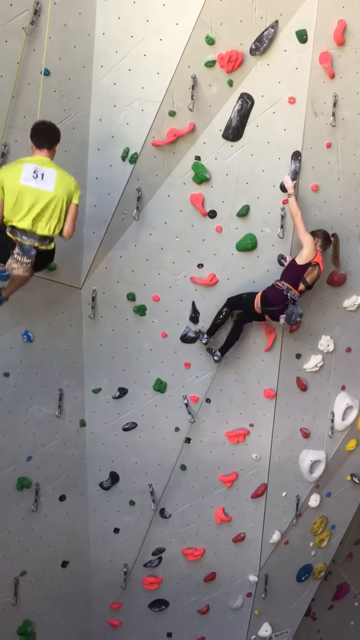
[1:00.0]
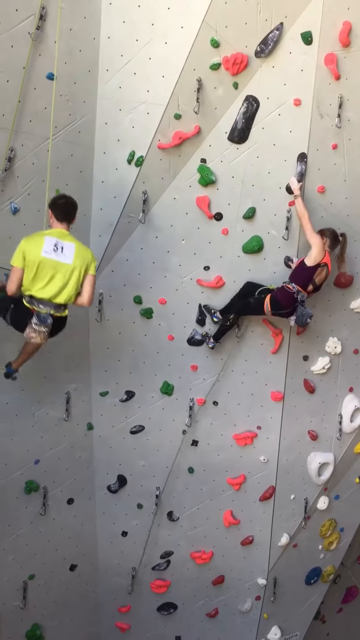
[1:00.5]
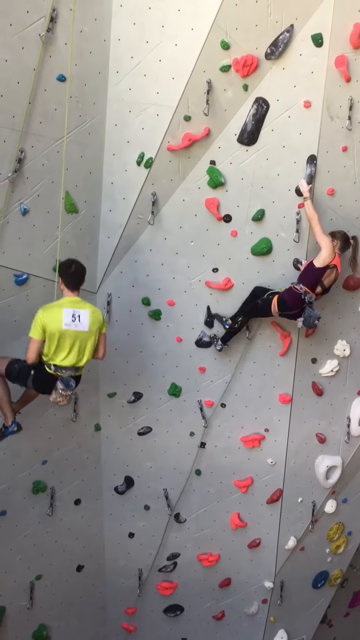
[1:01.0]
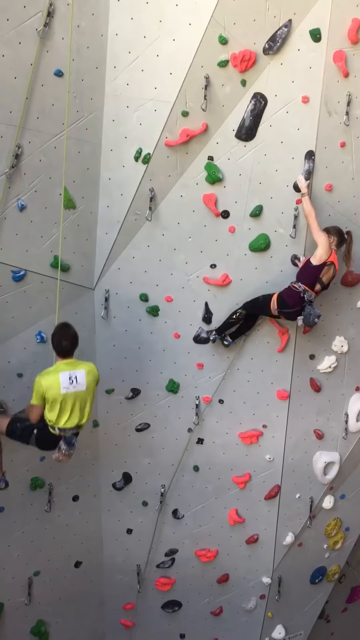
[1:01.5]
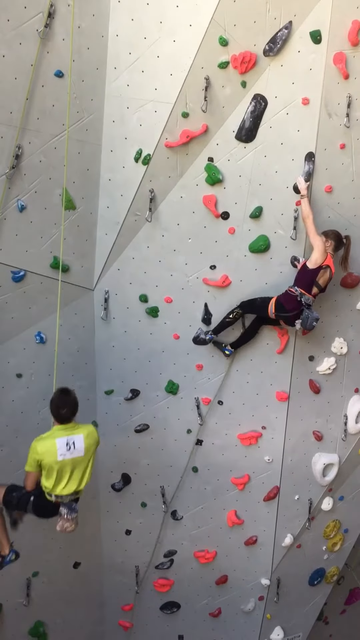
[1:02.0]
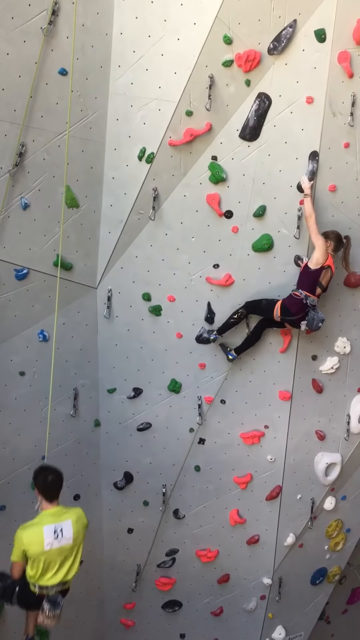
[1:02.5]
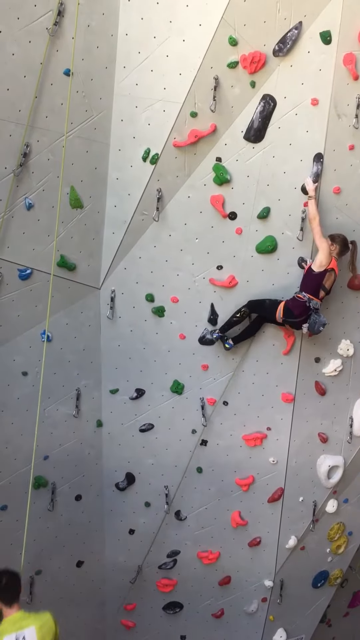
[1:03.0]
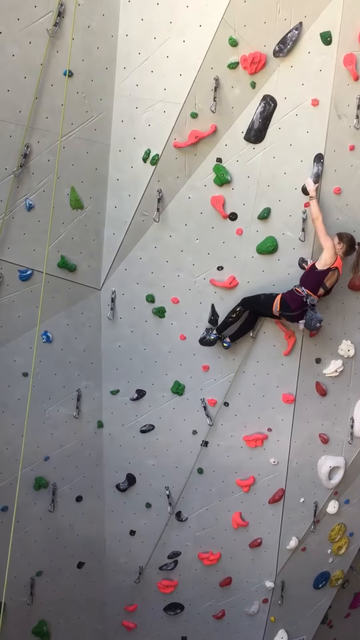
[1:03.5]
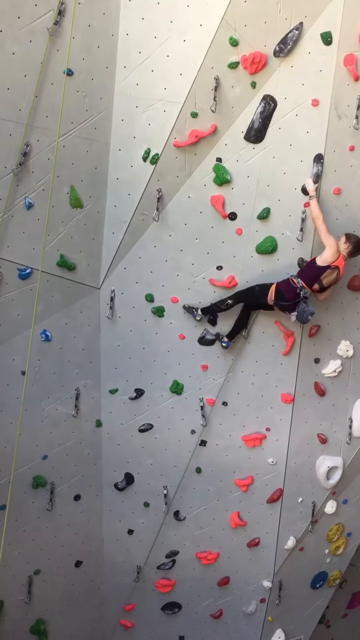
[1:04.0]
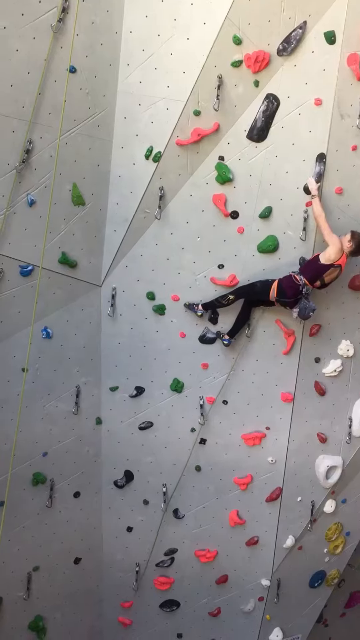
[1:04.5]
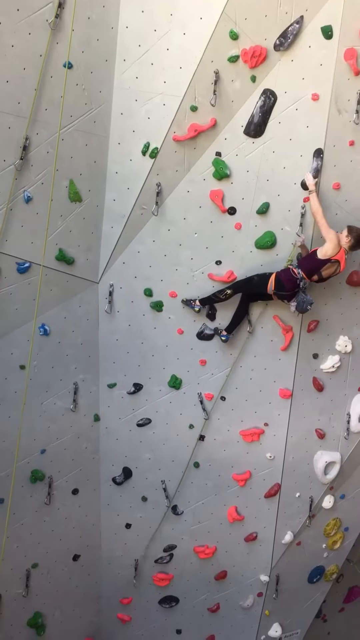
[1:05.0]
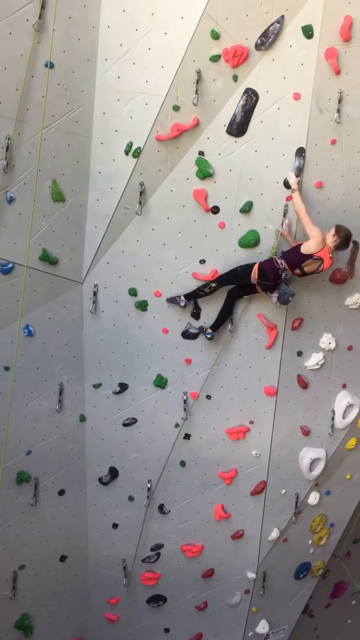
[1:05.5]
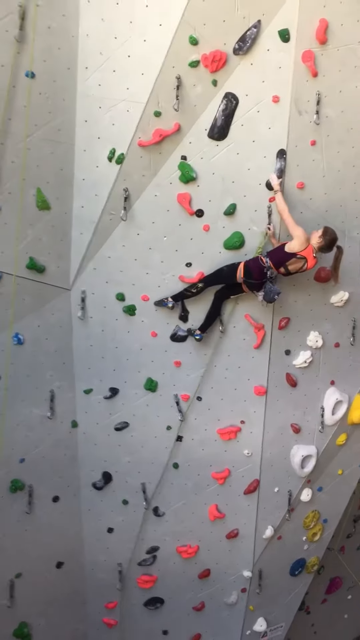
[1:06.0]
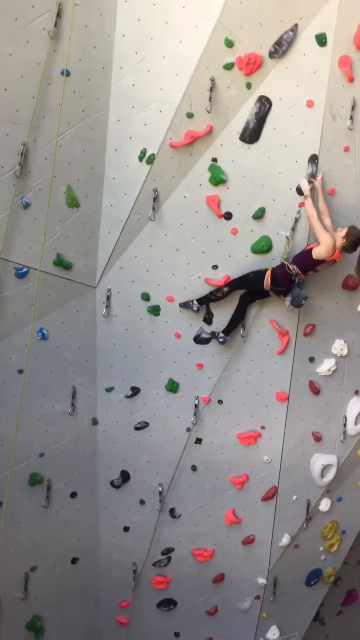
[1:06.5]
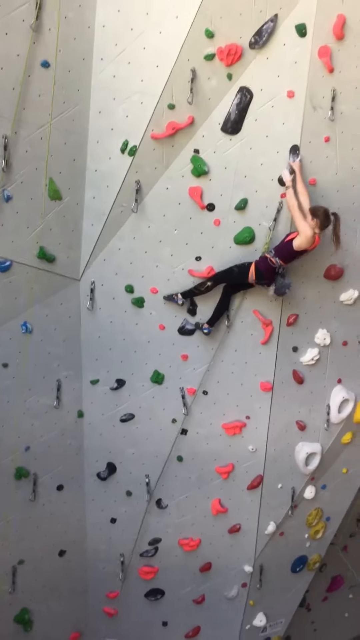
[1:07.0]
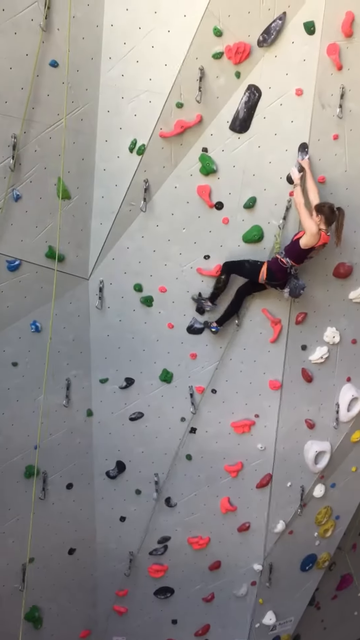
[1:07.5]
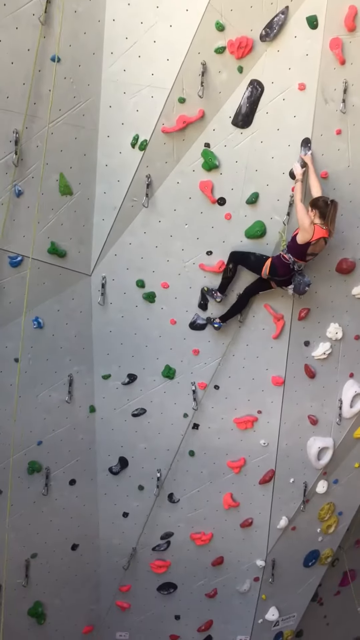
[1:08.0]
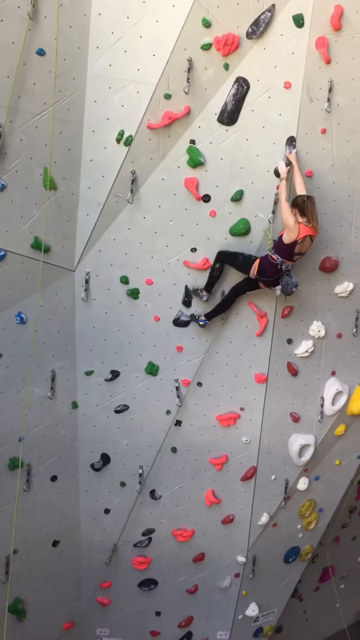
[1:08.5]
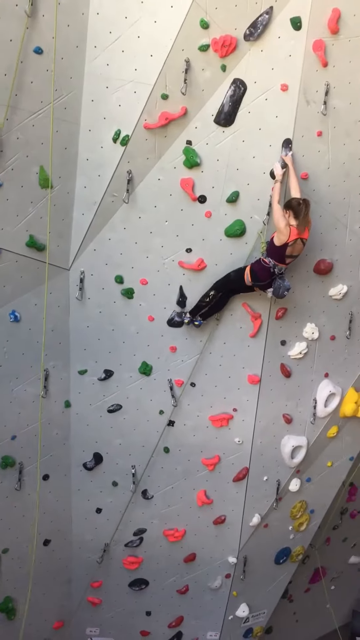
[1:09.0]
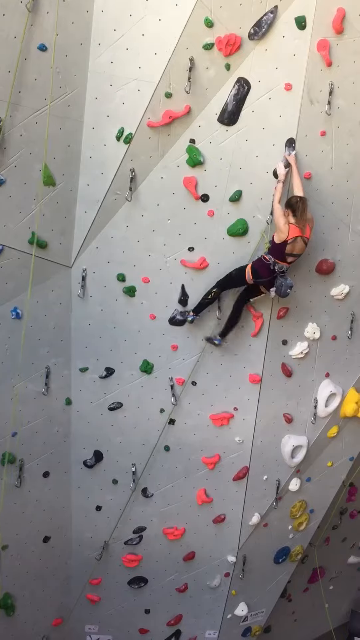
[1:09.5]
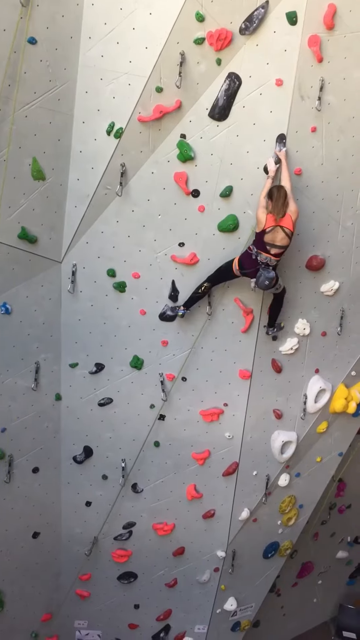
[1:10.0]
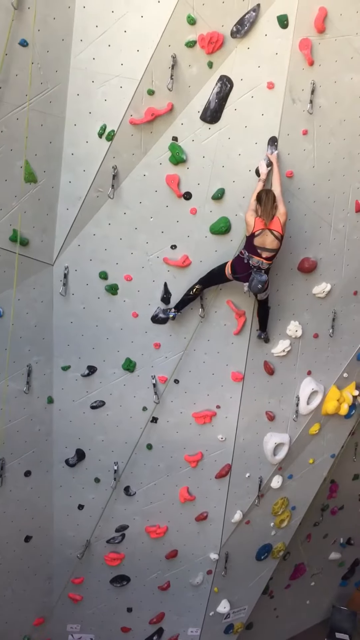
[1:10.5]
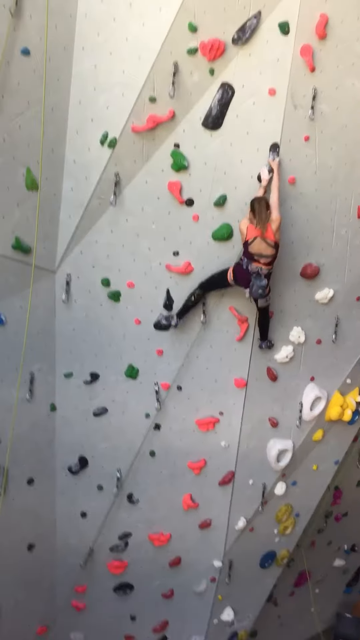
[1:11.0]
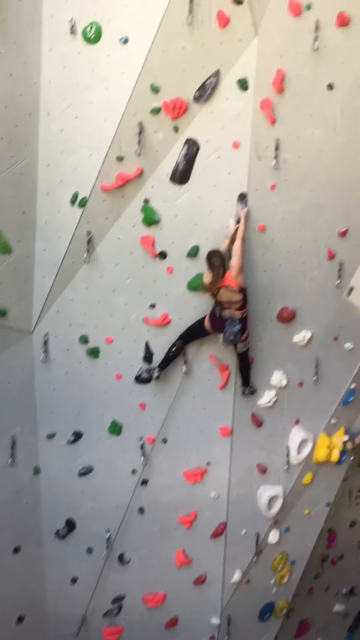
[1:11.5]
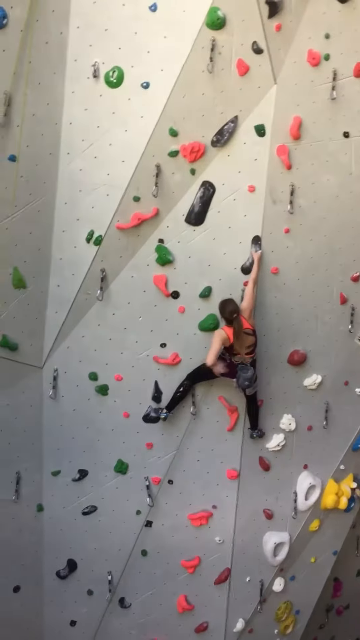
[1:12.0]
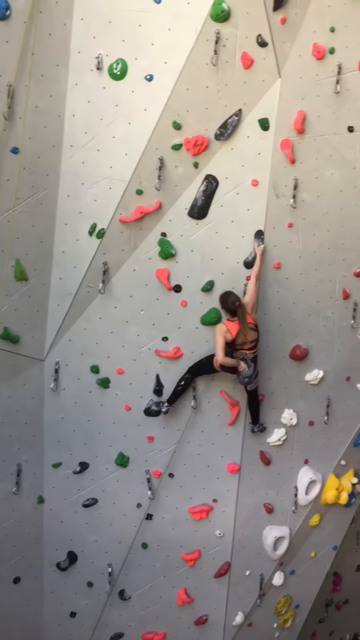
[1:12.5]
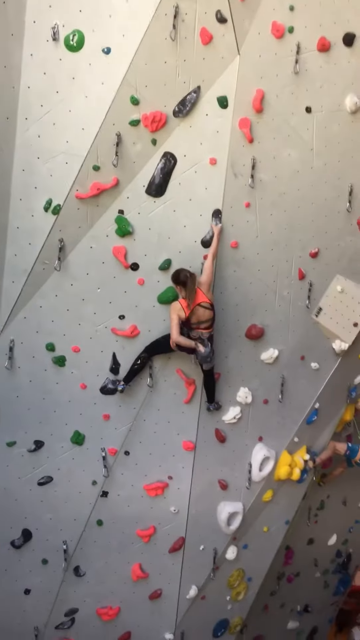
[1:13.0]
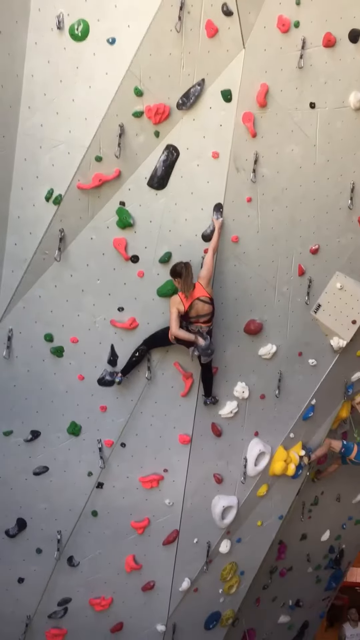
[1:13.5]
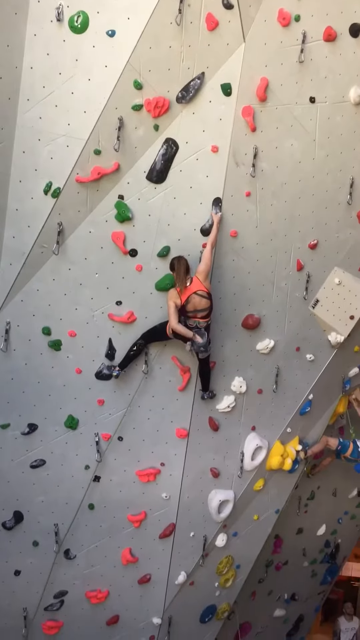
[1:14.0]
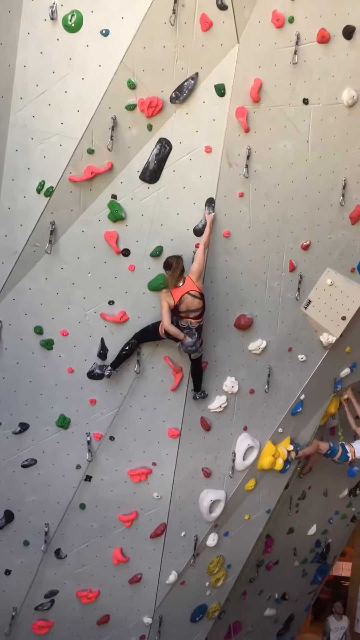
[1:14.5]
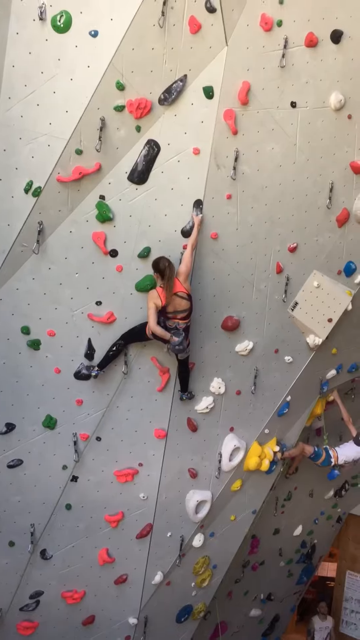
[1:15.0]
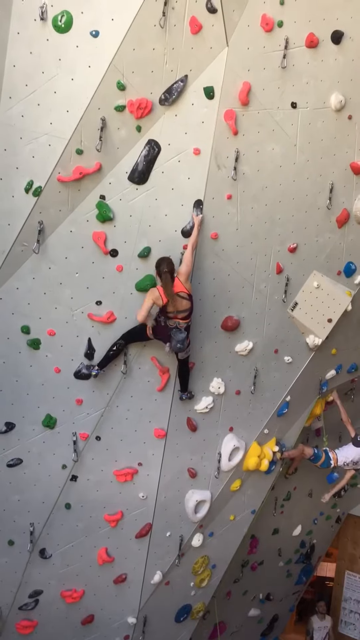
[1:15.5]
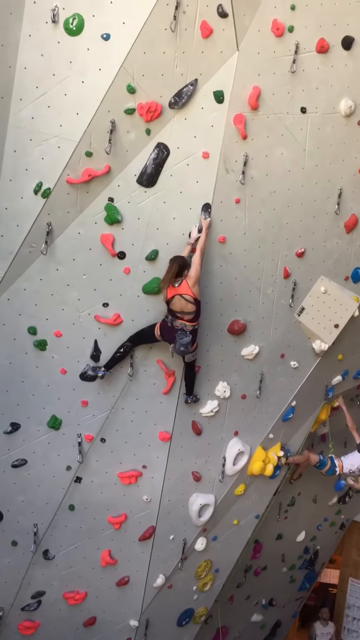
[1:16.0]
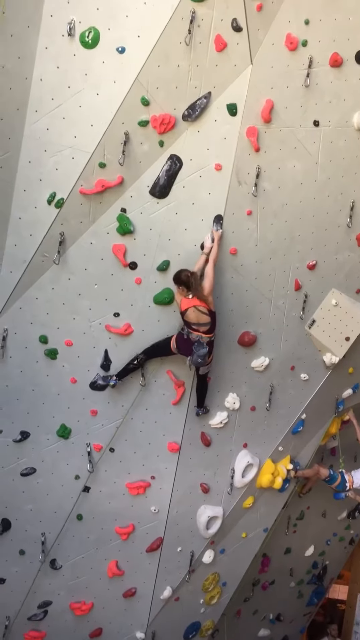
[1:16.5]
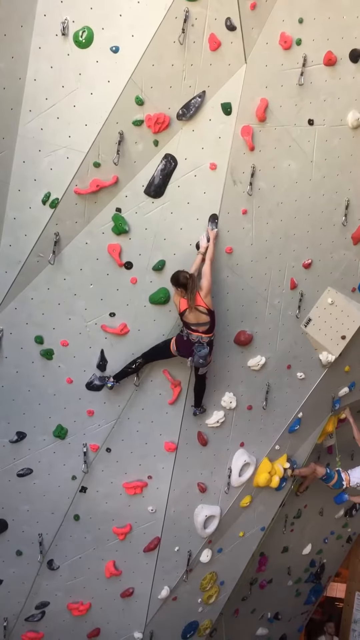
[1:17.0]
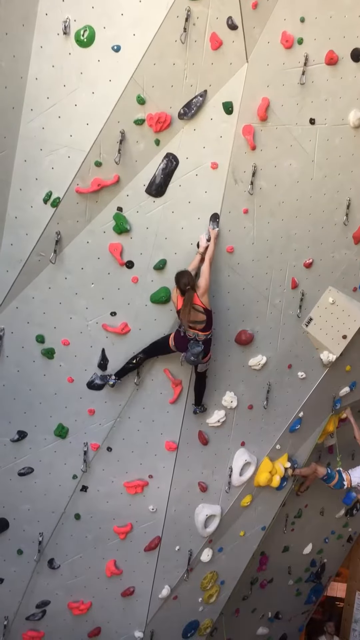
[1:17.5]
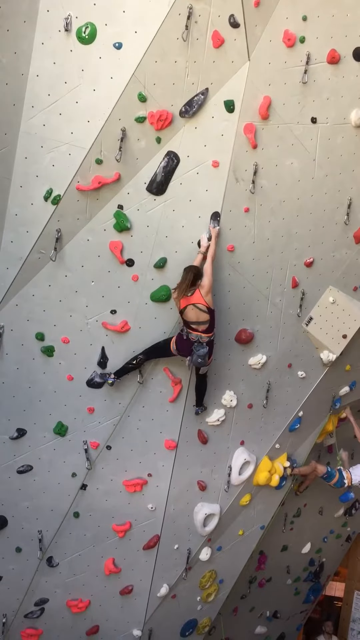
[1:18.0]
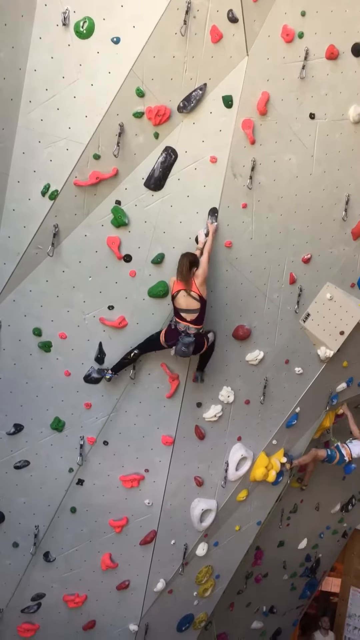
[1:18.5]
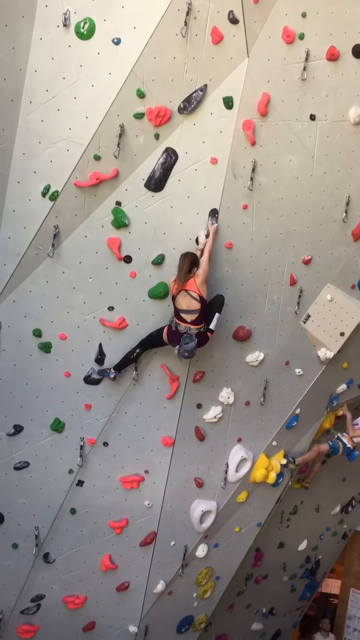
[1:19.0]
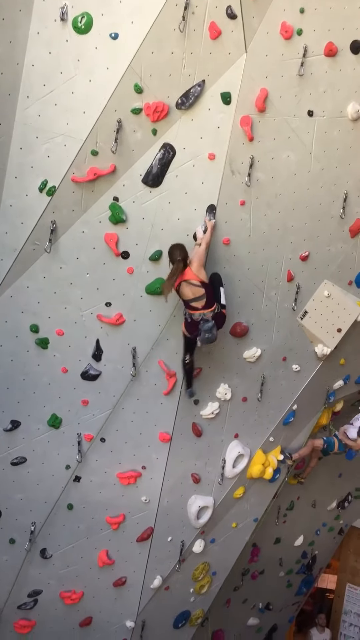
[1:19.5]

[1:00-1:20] A young woman climbs a grey climbing wall that has black, green, pink, blue, white, and yellow pieces, as well as little chains for the climbers. On the left side of the wall is a man in black pants and a yellow shirt with the number 51 in a white box on the back. The man in the yellow shirt descends as the woman continues to climb, her body angled diagonally to the right. She moves her feet toward a pink piece while stretching her body out and holding a chain, then grabs a black piece. She moves her right foot to a black piece on the right side of the wall. She reaches behind her with her left arm and adjusts her equipment, then brings her knee up and bends it as she swings her left foot under her and moves right on the wall.